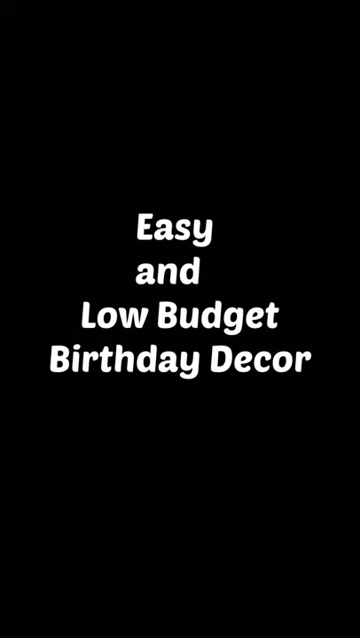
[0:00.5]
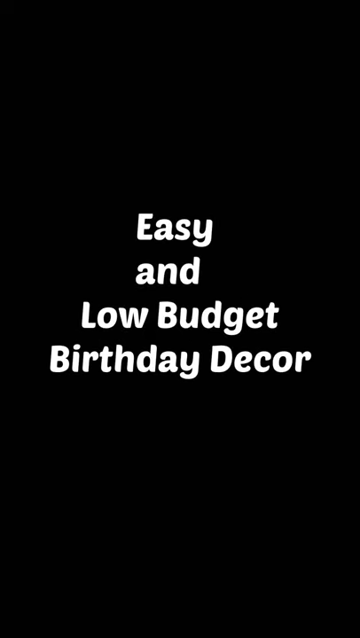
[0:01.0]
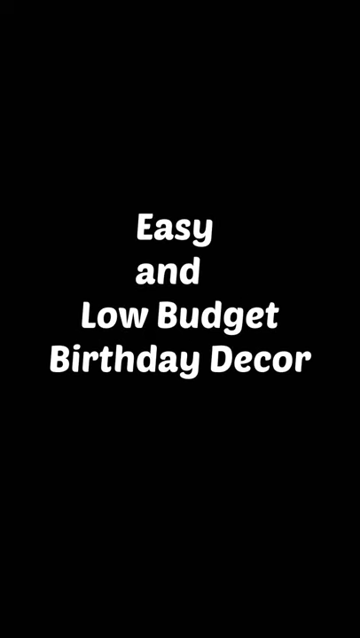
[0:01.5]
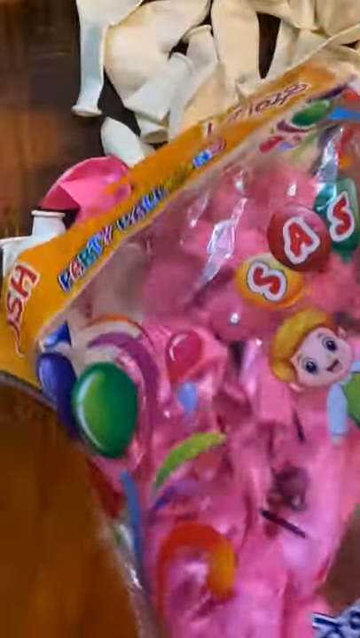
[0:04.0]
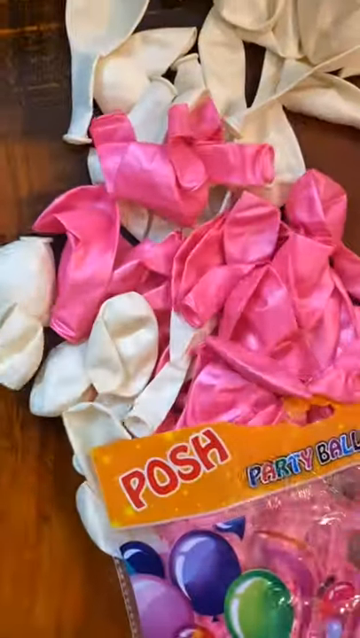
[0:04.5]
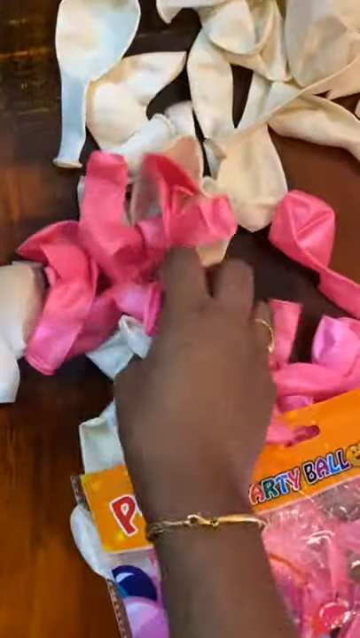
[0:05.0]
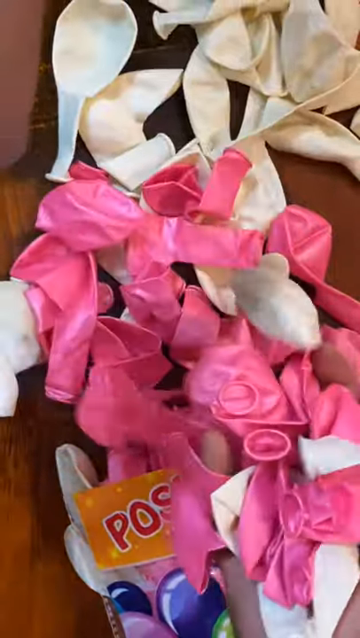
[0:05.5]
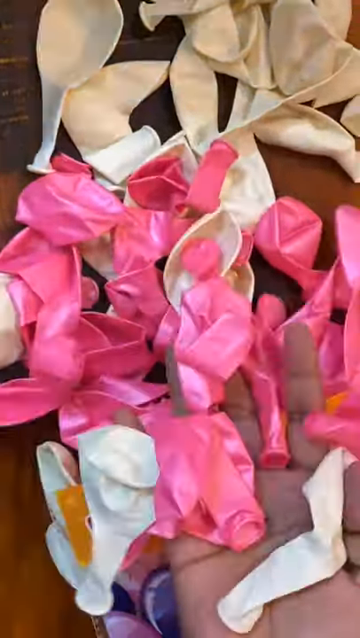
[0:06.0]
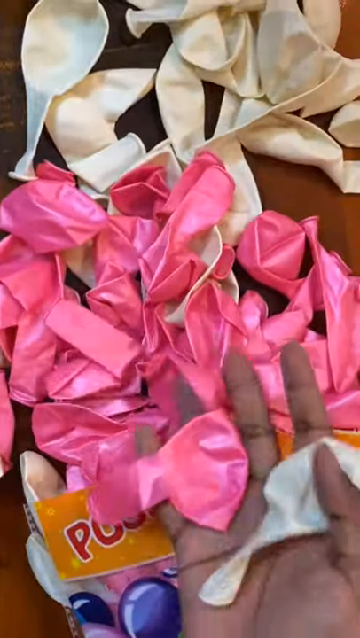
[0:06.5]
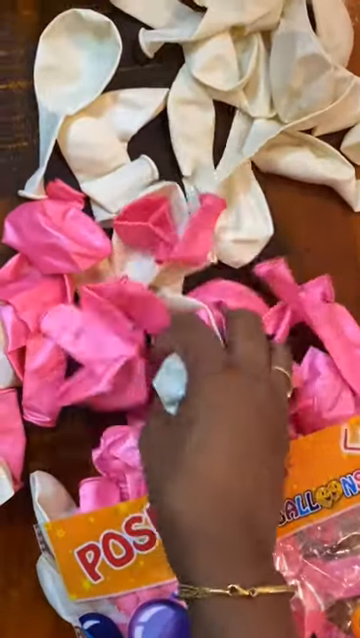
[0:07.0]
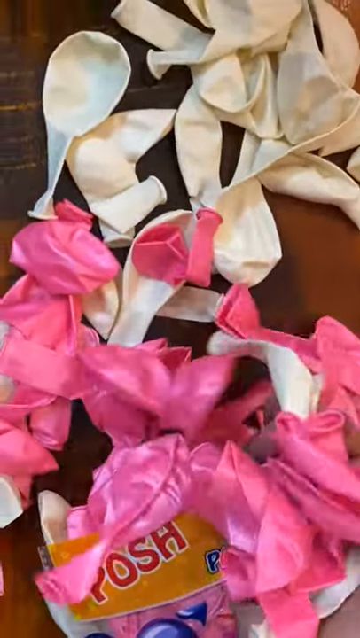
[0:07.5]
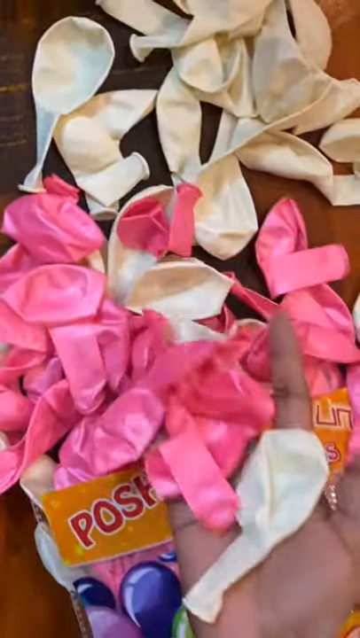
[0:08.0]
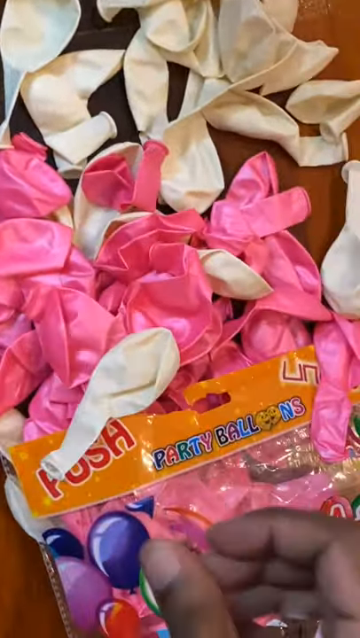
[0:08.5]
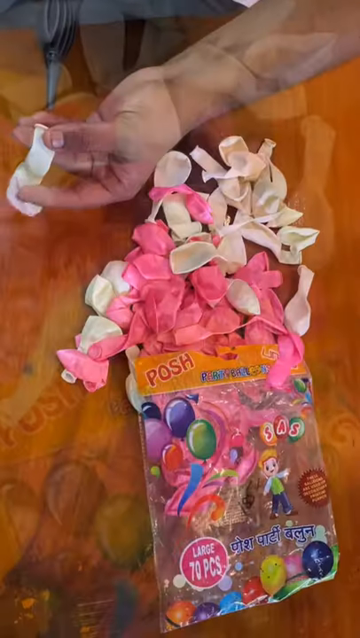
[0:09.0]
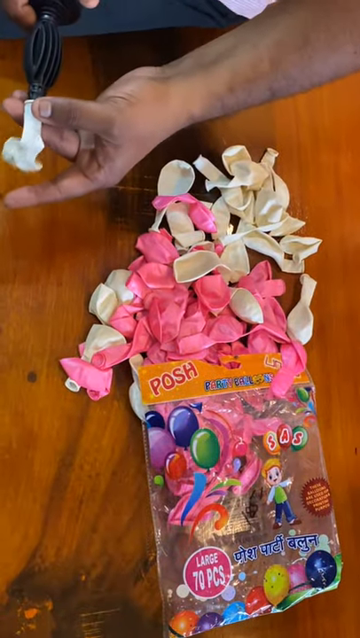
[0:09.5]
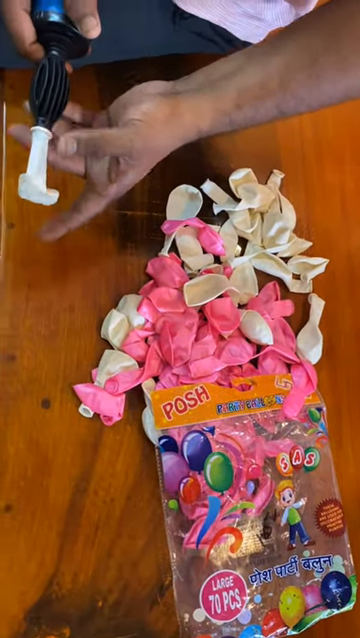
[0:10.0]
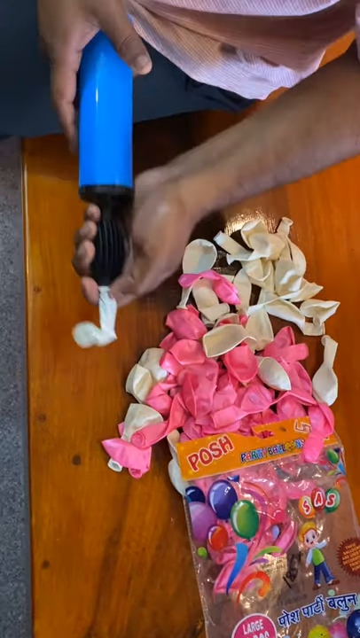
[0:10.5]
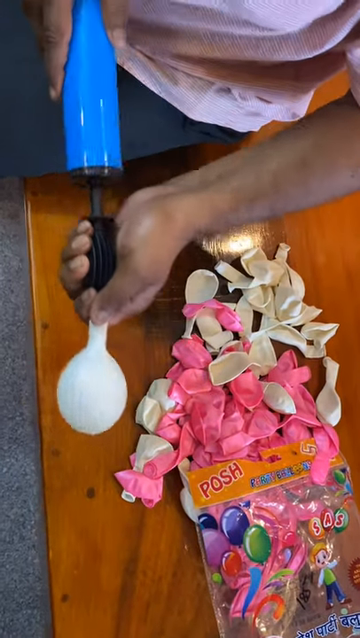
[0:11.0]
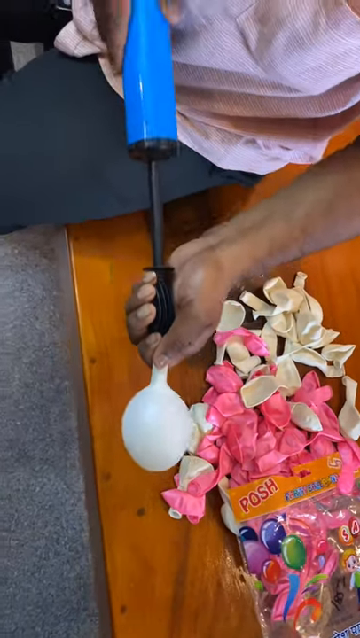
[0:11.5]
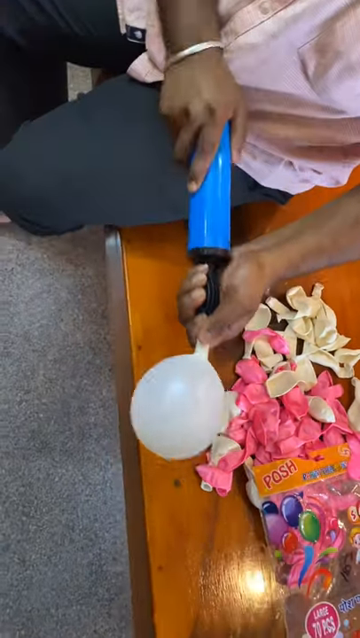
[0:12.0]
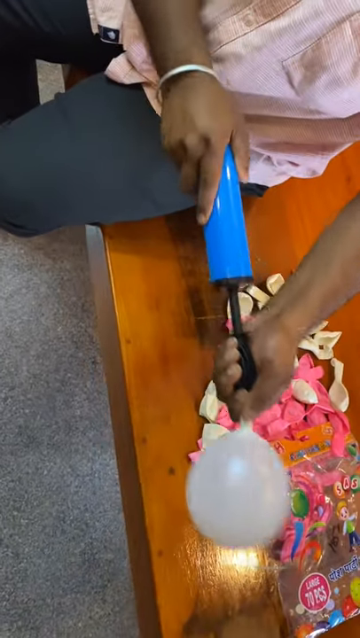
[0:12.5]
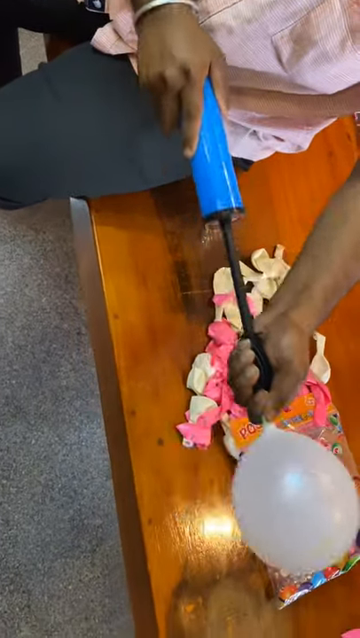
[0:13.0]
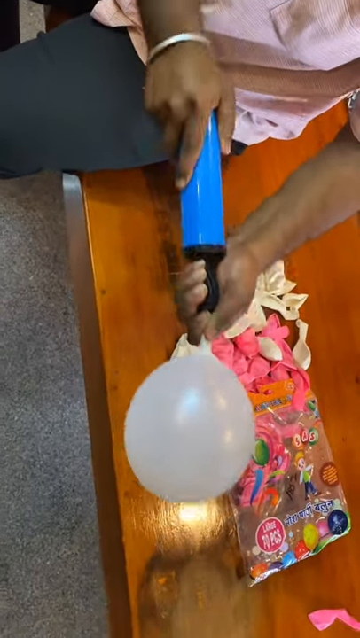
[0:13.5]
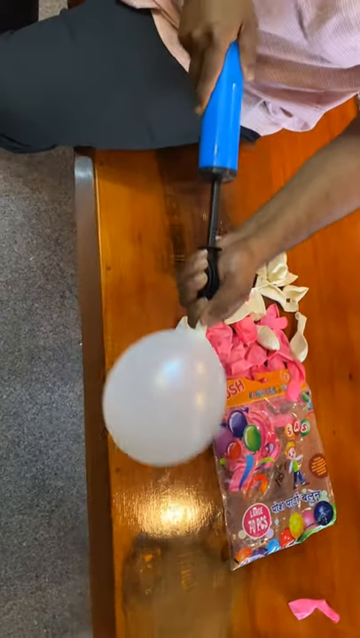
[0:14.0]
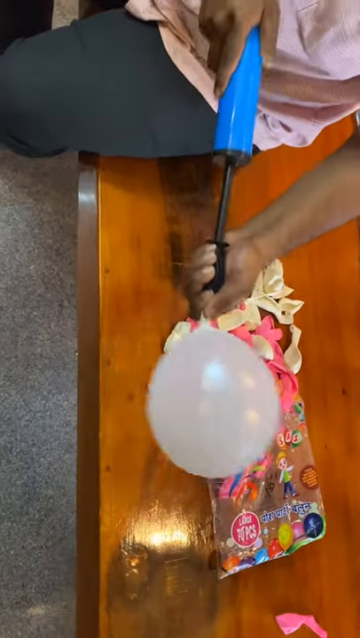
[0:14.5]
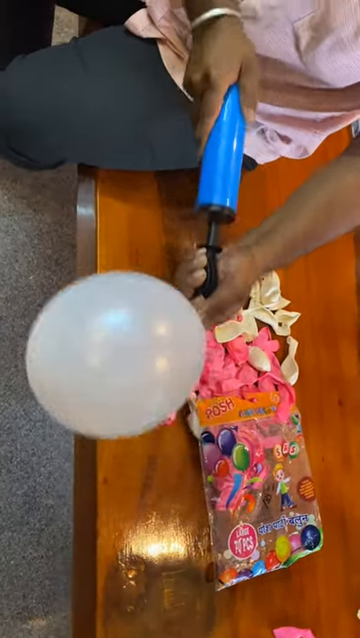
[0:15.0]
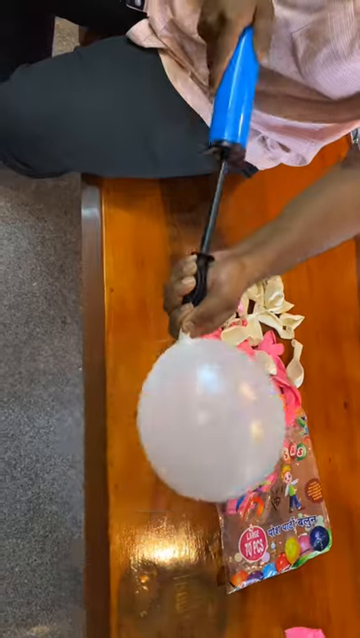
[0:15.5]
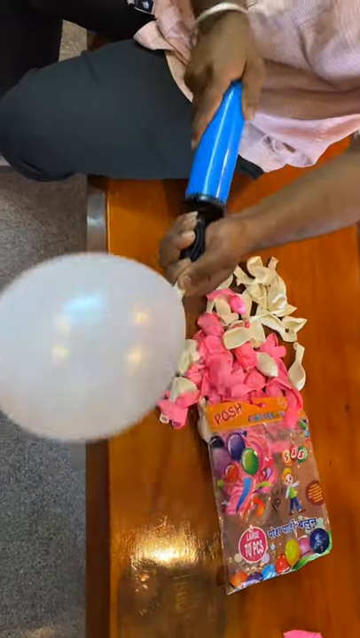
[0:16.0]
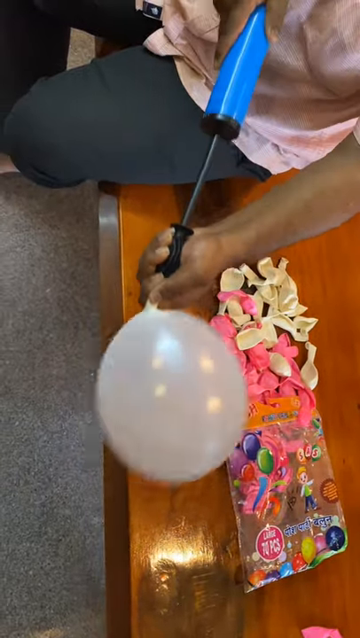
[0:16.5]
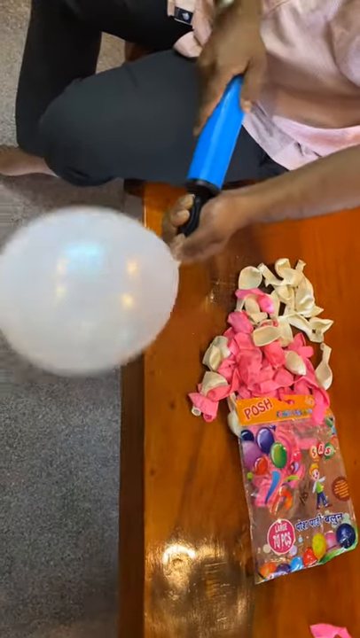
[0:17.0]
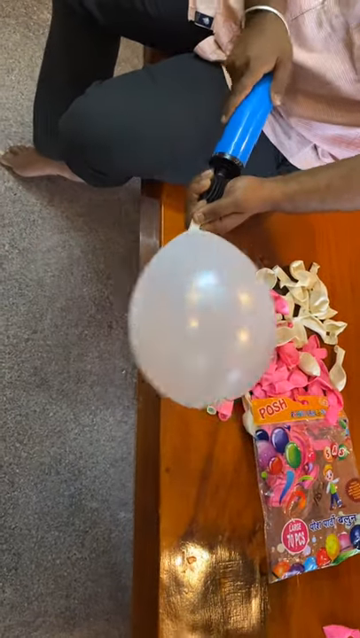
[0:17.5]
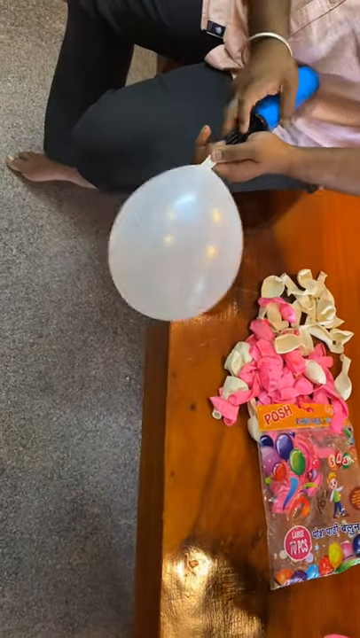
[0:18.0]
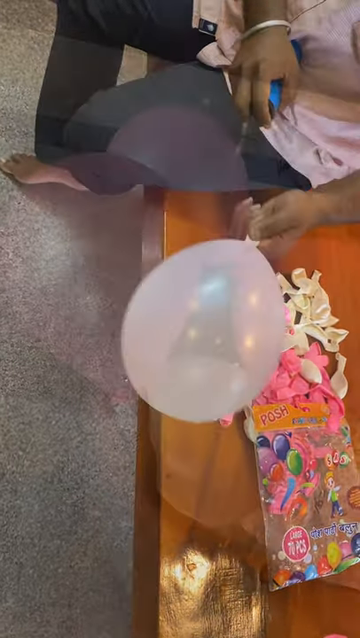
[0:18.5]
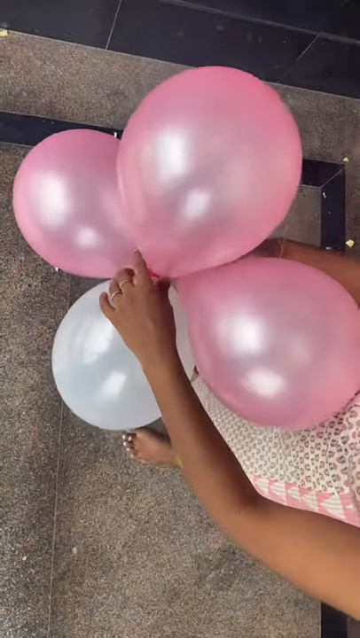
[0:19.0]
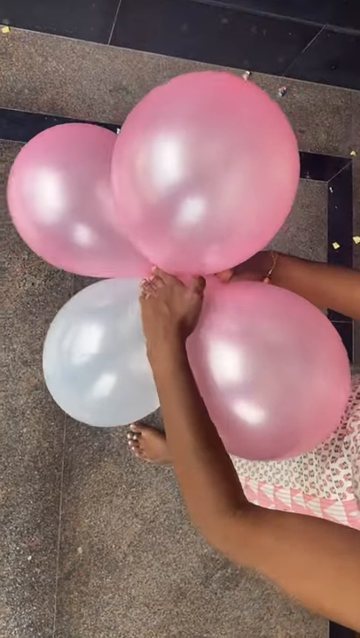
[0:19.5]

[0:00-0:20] White text on a completely black screen reads "easy and low budget birthday decor," and the video stays on it for a little while. The scene shifts to a plastic bag with the label "Posh" on the top, which looks like it has different colored balloons inside. Someone empties the bag onto a wooden table, and a hand reaches out, grabs the balloons, plays with them a little, and puts them back. The scene skips to the hand holding up one of the balloons and putting it onto a balloon pump; the person pumps it over and over until the balloon reaches the size they want, then takes it off. The scene shifts again to somebody standing on a carpet, holding balloons in front of them and tying them together. There are four balloons, which appear to be pink; it looks like there could be three pink ones and one white one. The ceiling behind is white.